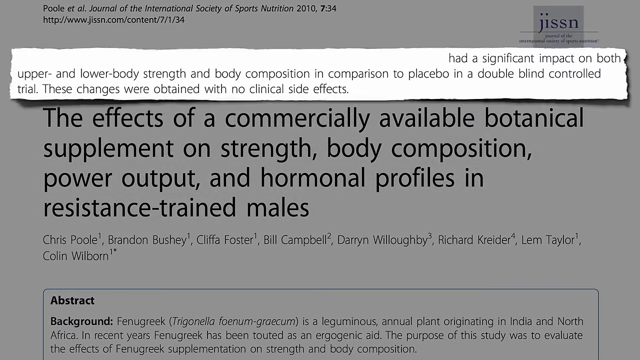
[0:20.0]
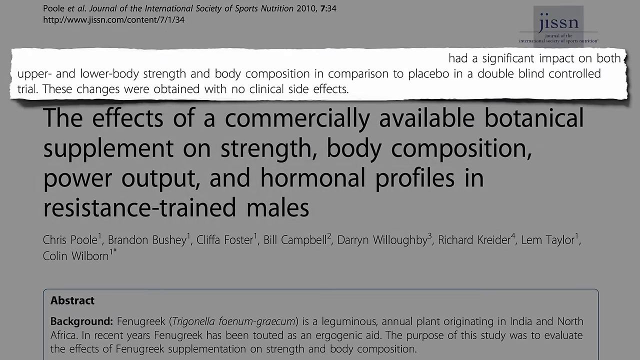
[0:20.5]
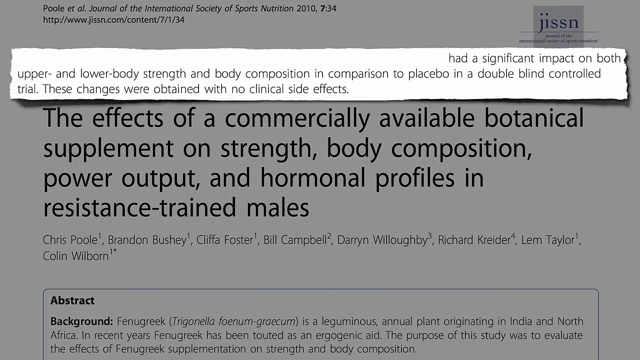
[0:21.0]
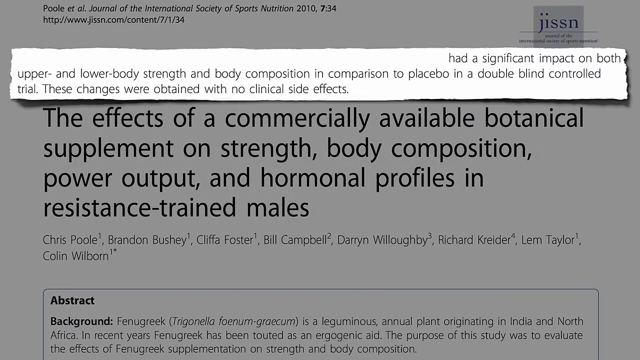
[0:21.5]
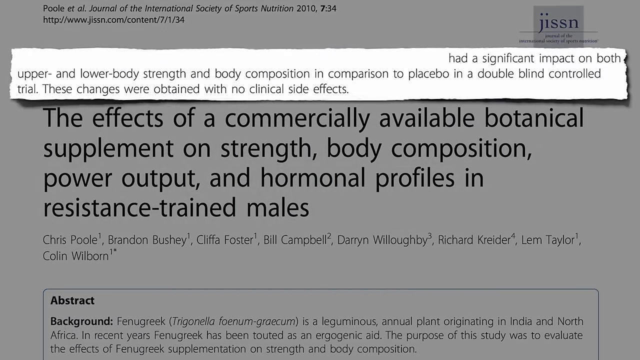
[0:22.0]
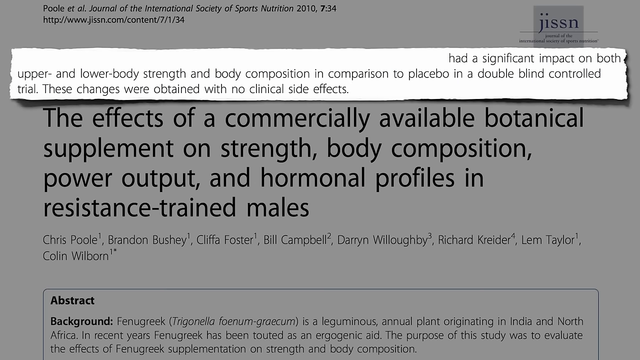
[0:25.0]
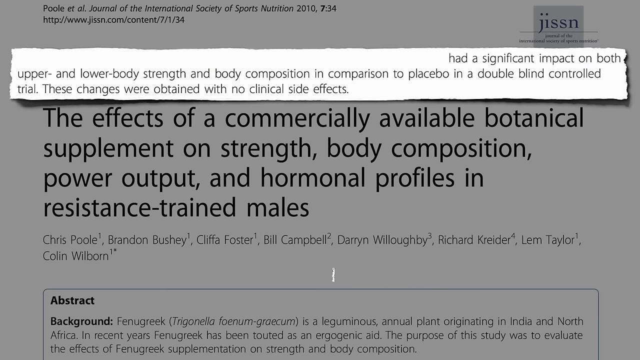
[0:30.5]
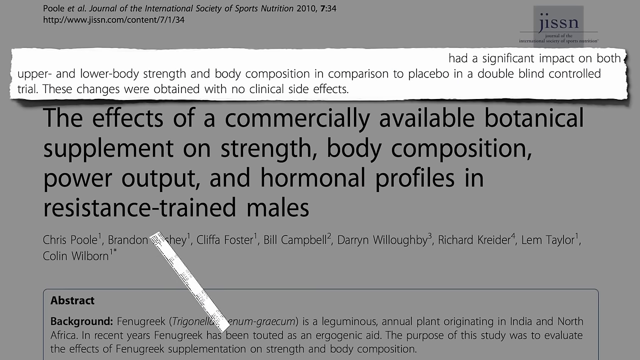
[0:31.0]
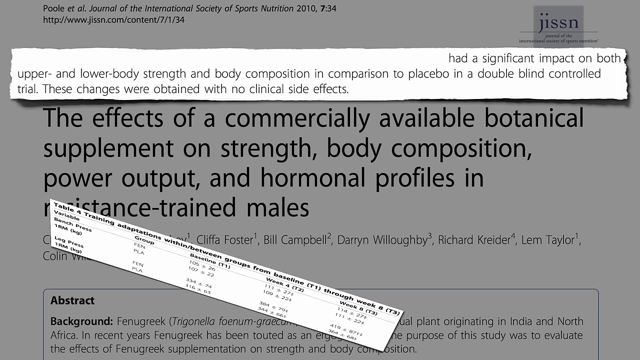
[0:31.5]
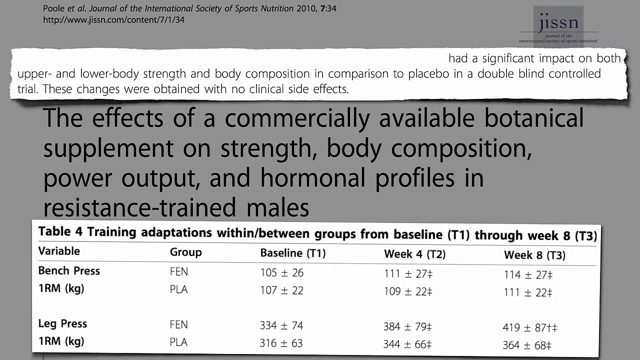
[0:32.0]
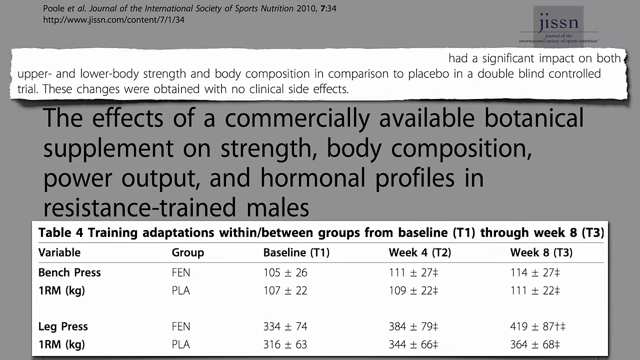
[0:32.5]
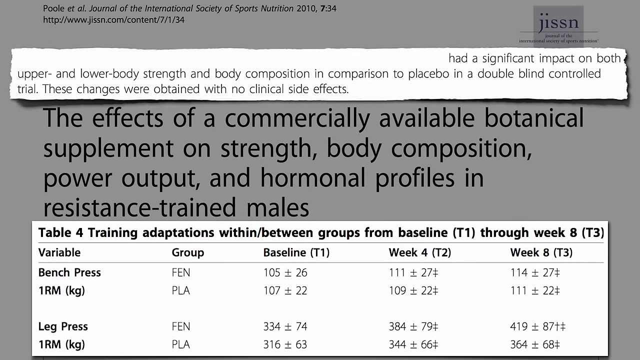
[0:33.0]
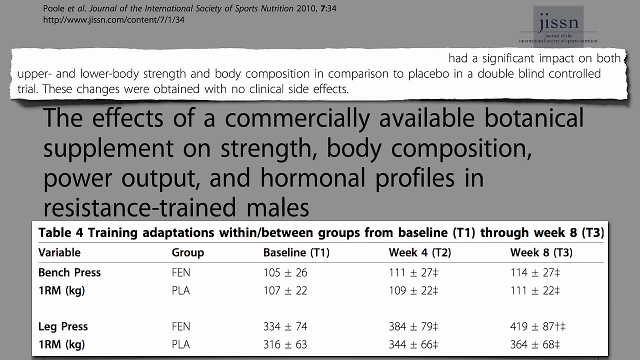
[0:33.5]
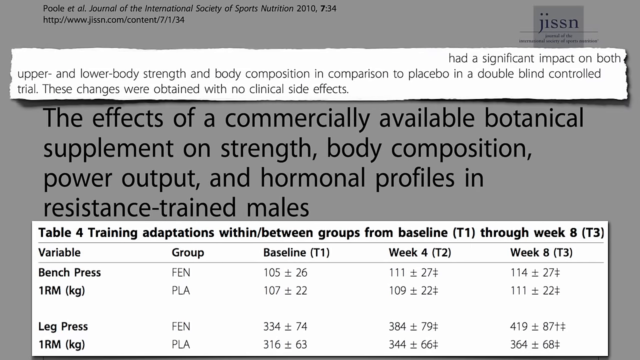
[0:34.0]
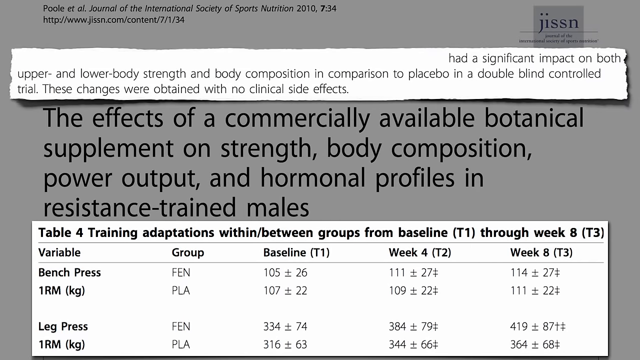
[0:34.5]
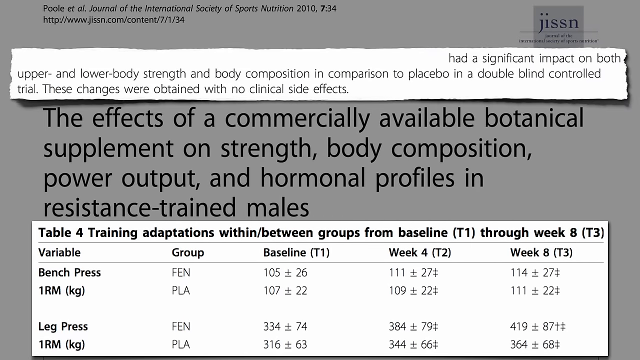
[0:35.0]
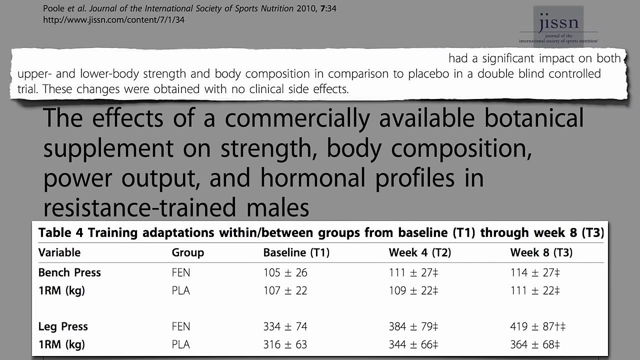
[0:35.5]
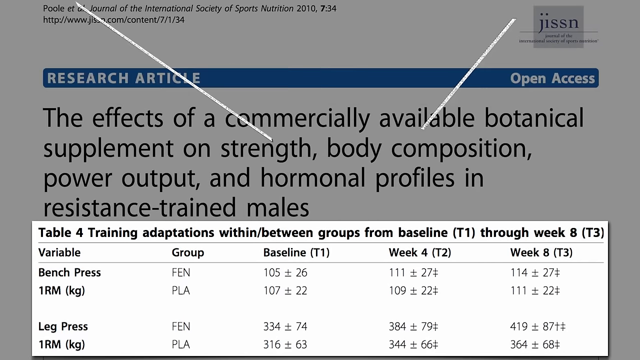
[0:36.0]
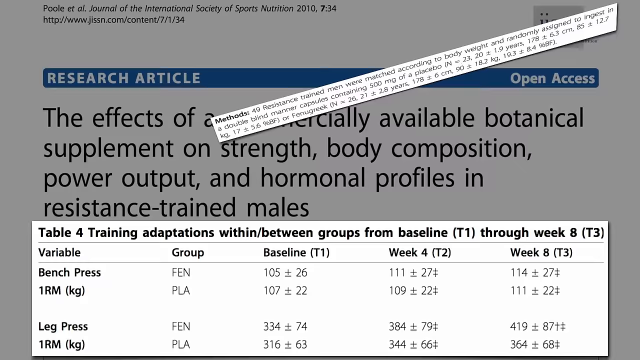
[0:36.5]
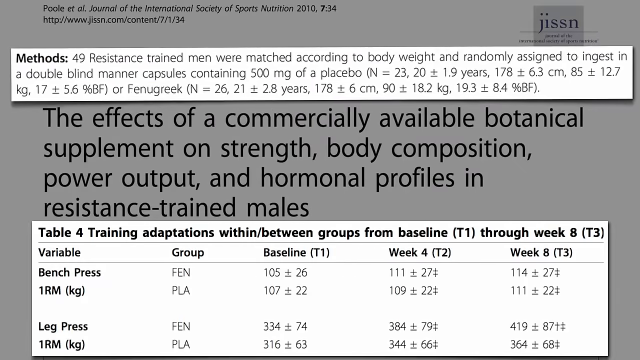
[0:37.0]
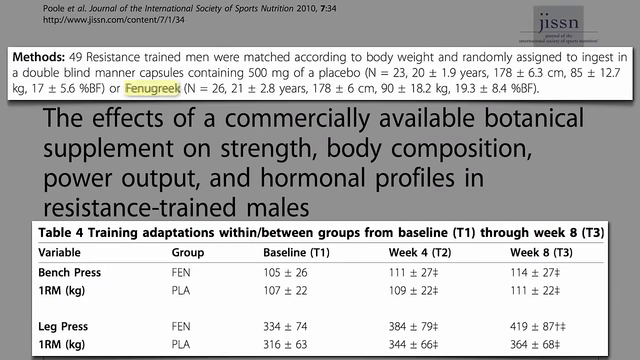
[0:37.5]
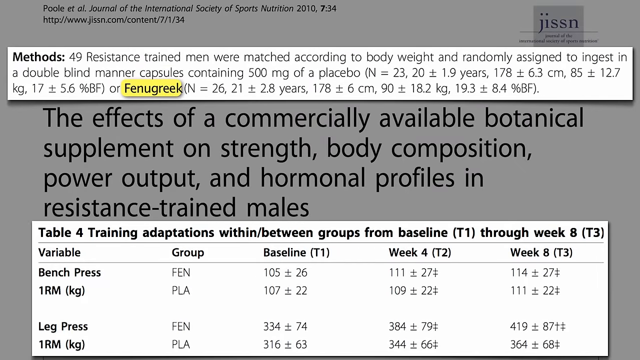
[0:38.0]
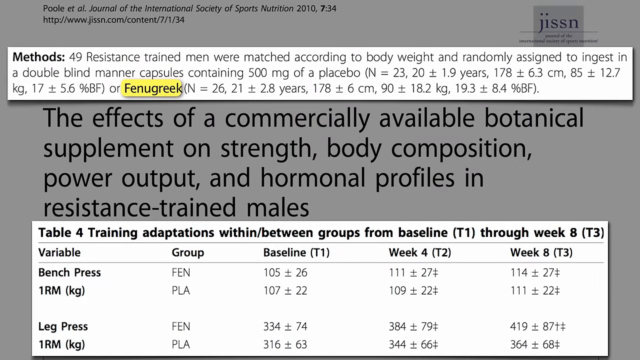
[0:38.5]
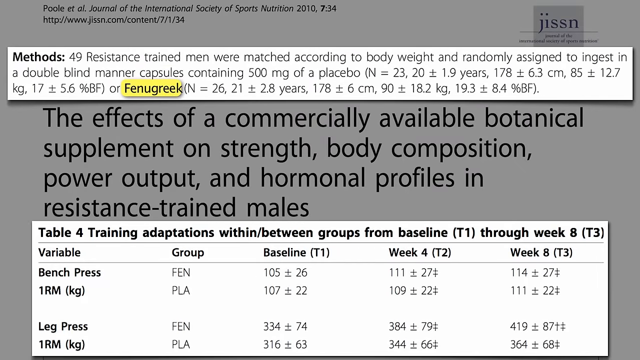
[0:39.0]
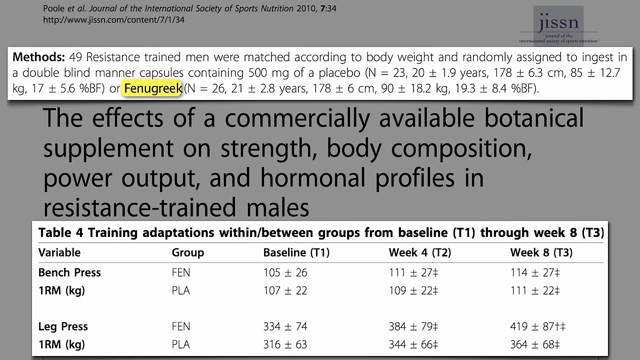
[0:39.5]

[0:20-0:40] A white object rotates and stops, revealing a white strip with a quote from the article: "it has a significant impact on both upper and lower body strength and body composition in comparison to placebo in a double blind control trial. These changes were obtained with no clinical side effects." Another swirling white object becomes a second quote box, this one a table: "table four, training adaptations within / between groups from baseline t1 through week eight t3." The top quotation box swirls and disappears, and a new one appears reading "methods" and "49 resistance trained men were matched according to body weight and randomly assigned to ingest in a double blind manner capsules of a placebo and or fenugreek," followed by more detail.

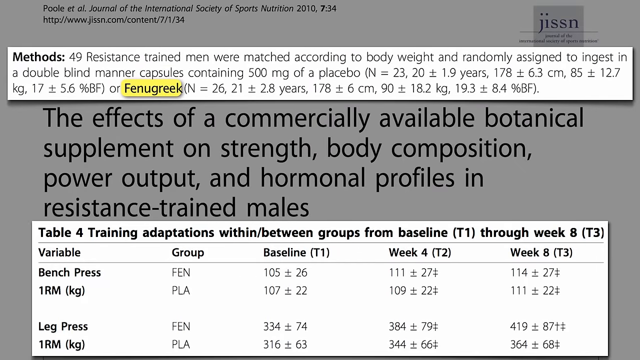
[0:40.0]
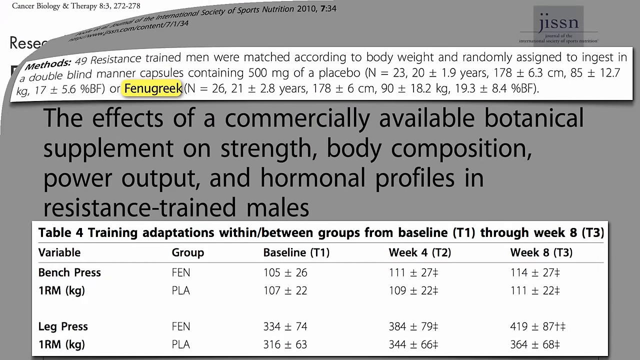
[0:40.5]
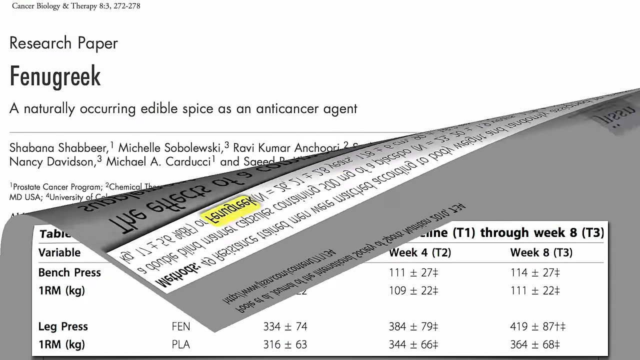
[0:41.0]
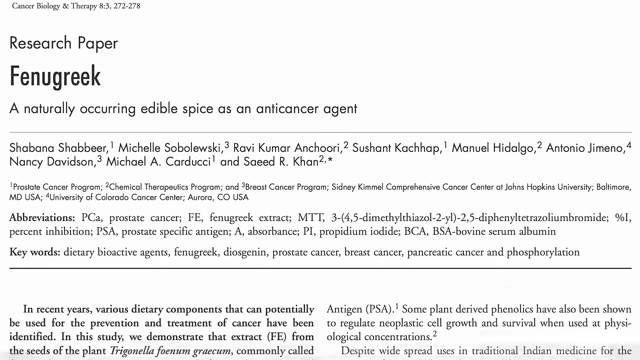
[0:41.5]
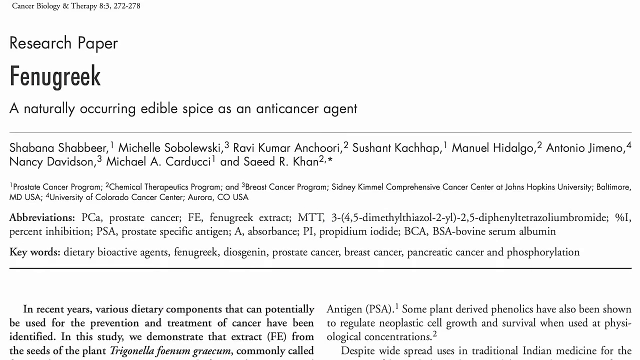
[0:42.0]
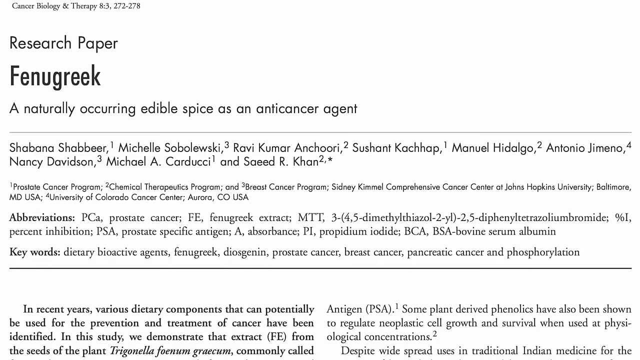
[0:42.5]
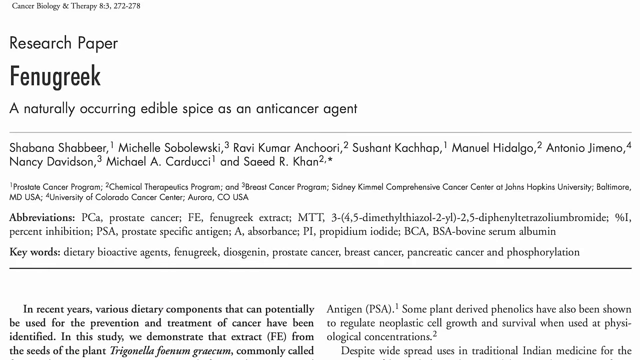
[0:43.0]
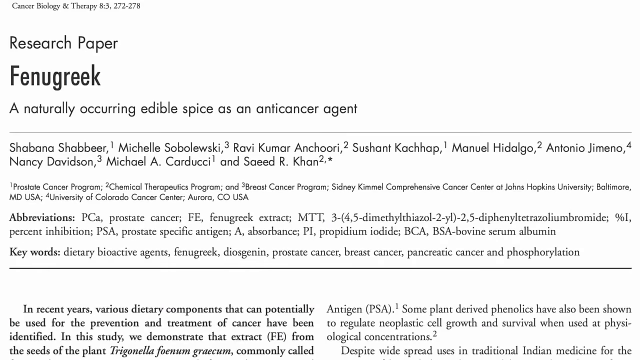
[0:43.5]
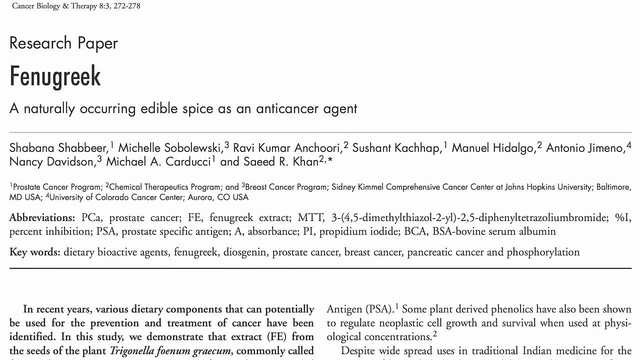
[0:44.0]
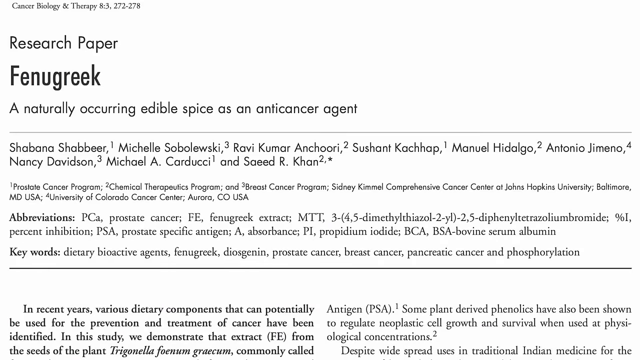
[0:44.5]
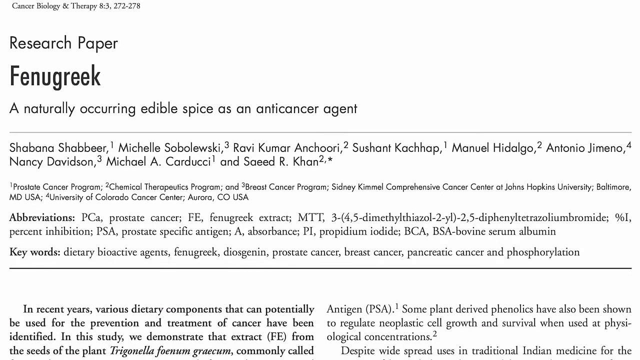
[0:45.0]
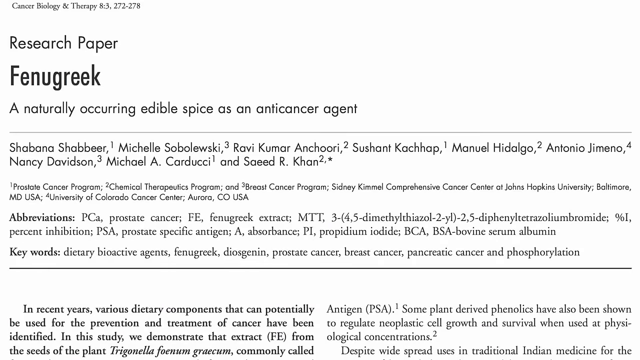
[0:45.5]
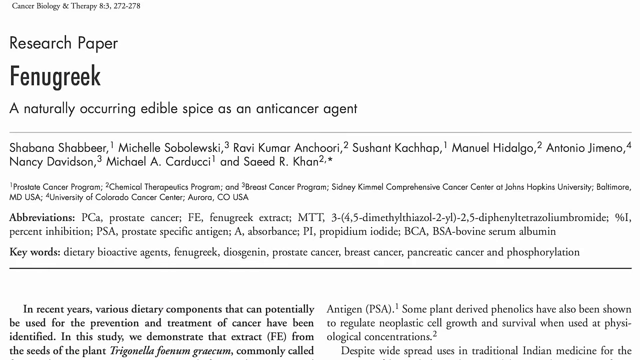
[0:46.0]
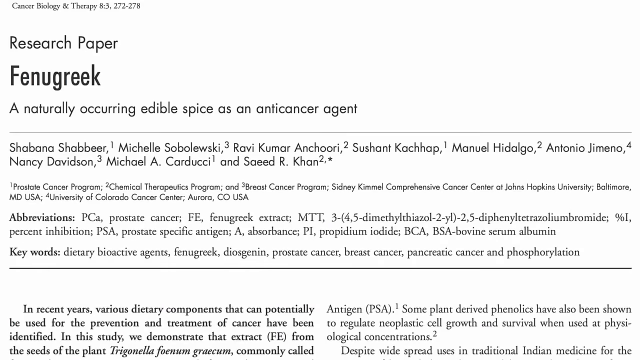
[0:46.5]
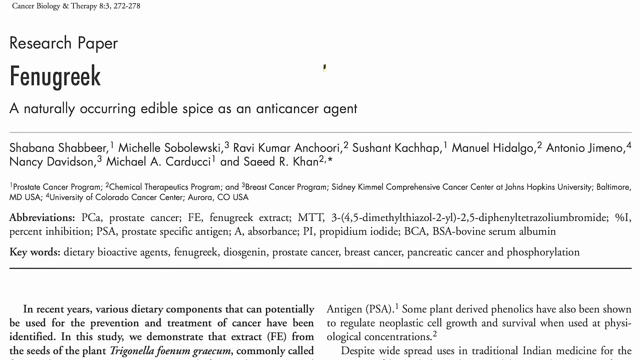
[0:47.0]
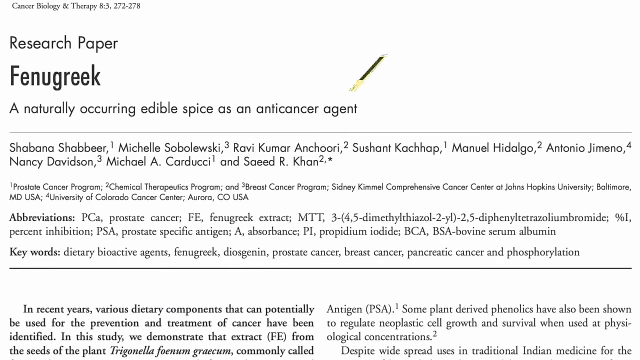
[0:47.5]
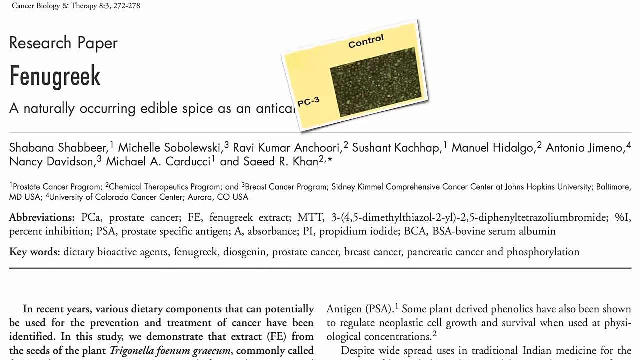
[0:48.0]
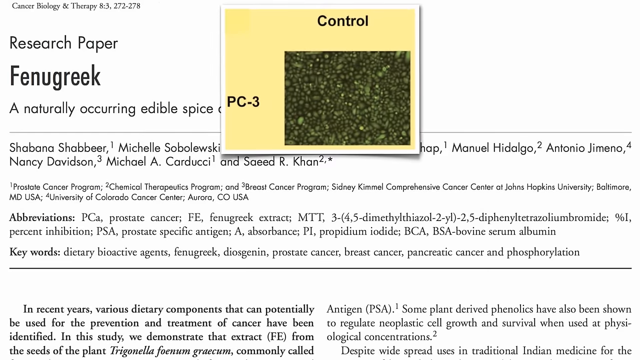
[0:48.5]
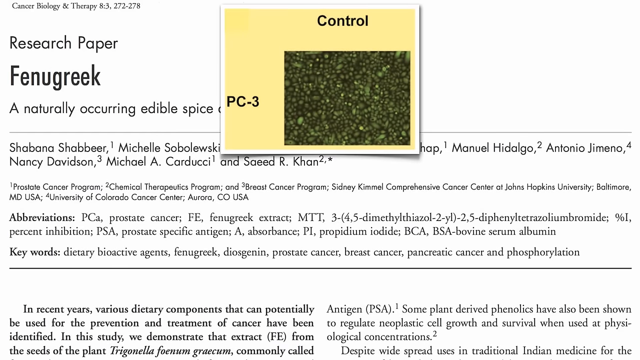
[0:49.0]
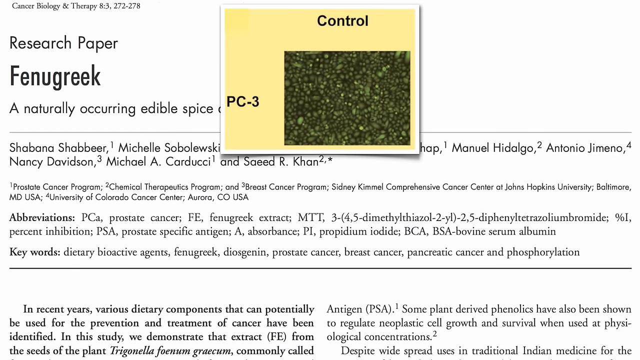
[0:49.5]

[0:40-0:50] The word "Fenugreek" is highlighted in yellow. The whole screen then curls down like a piece of paper from the upper left corner and disappears. Next is a screen with a white background and black type. A small picture appears in a yellow box, labeled "control" on the top and "PC3" on the left. The main part of the screen reads "research paper," with "Fenugreek" underneath and then "a naturally occurring edible spice as an anti-cancer agent." The authors are listed below, and below them are their programs or universities.